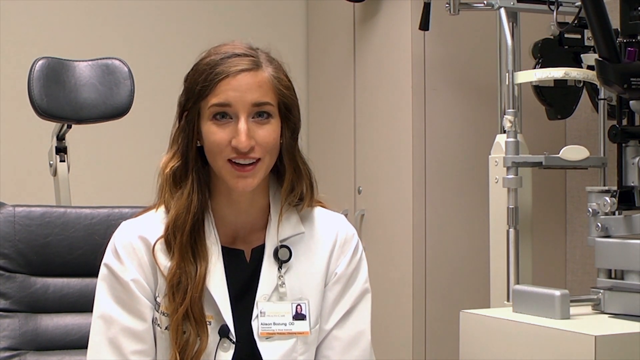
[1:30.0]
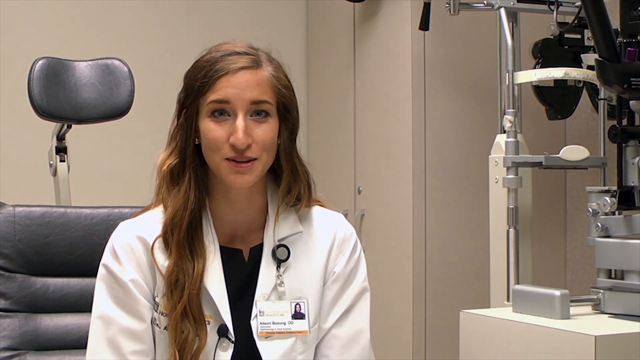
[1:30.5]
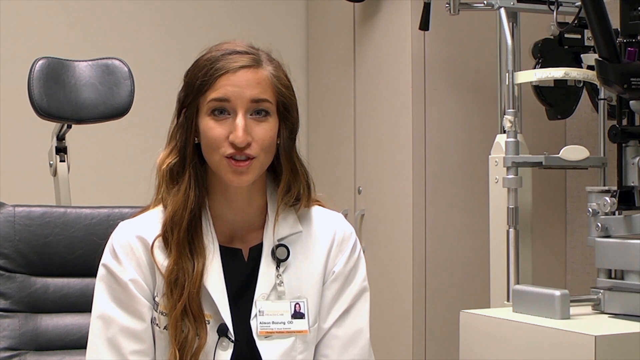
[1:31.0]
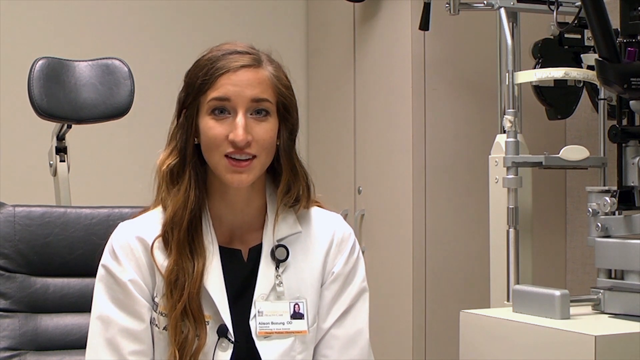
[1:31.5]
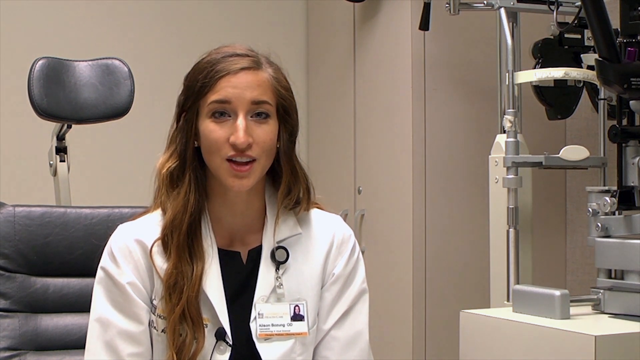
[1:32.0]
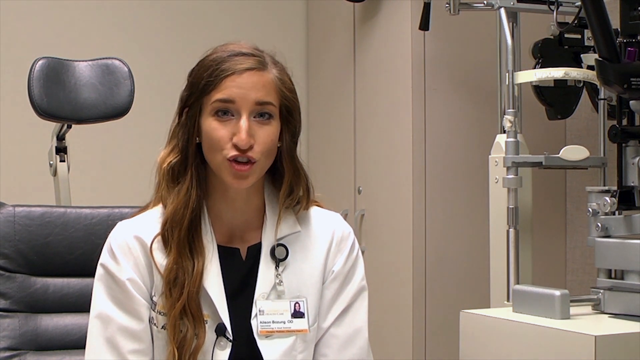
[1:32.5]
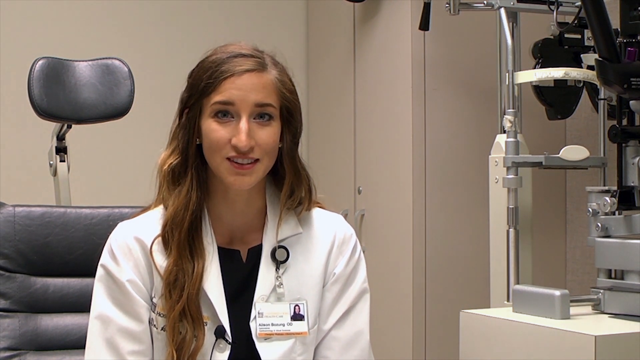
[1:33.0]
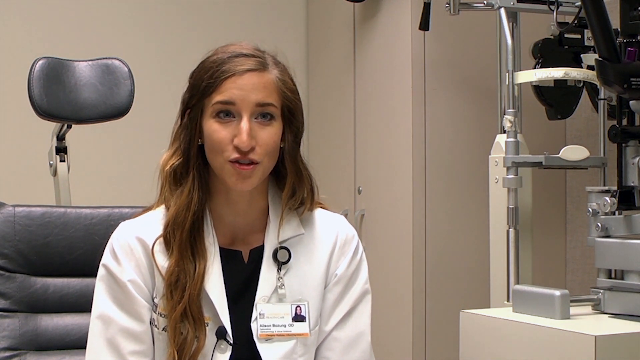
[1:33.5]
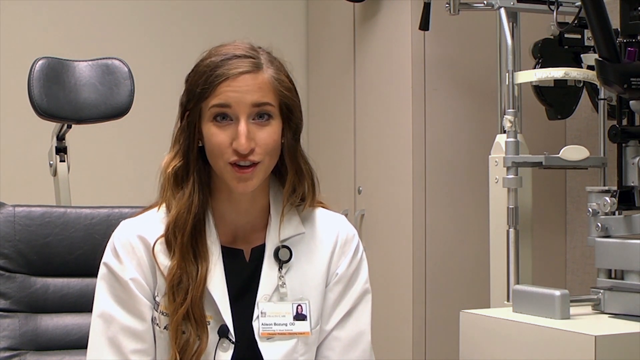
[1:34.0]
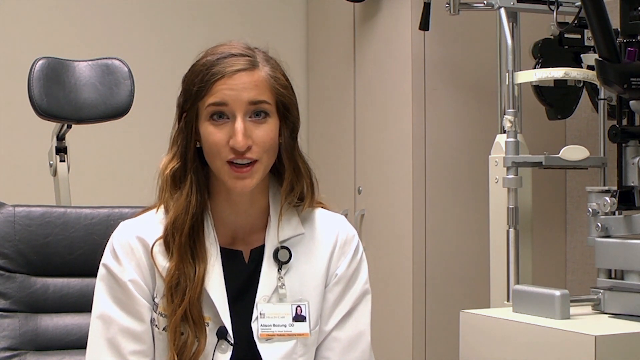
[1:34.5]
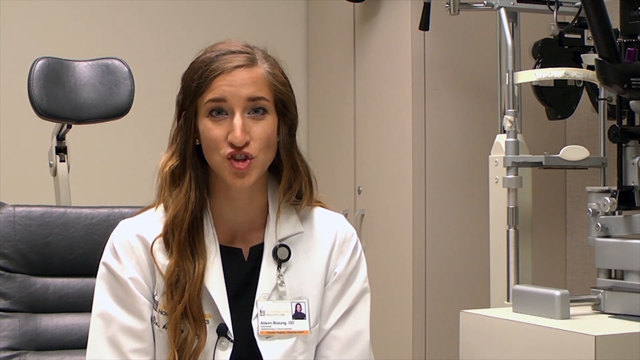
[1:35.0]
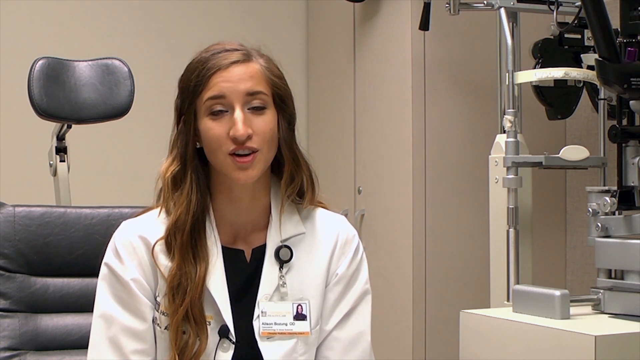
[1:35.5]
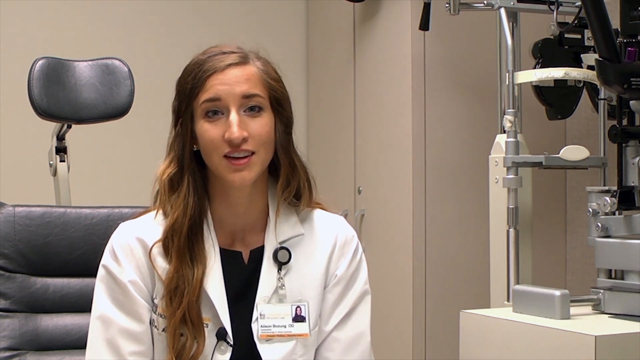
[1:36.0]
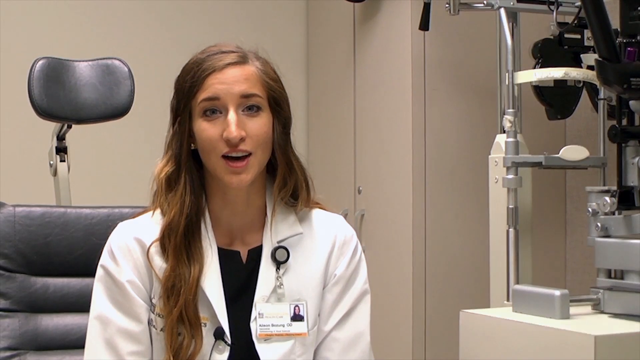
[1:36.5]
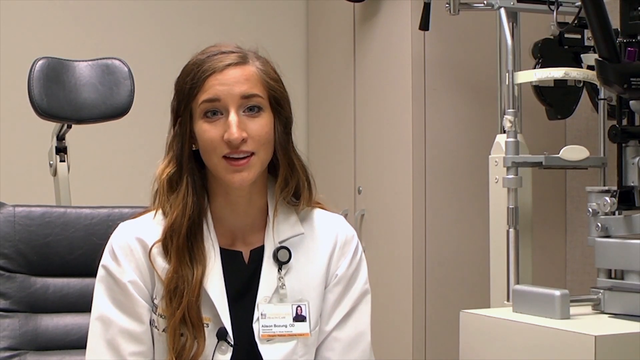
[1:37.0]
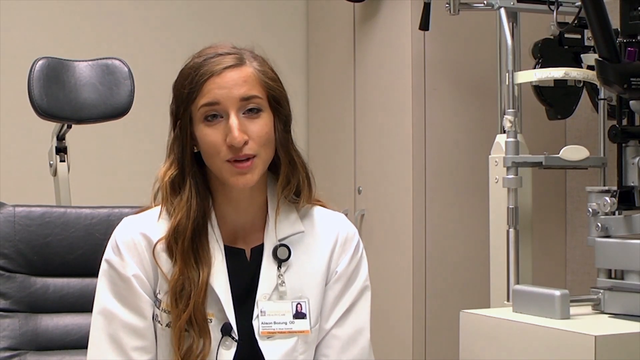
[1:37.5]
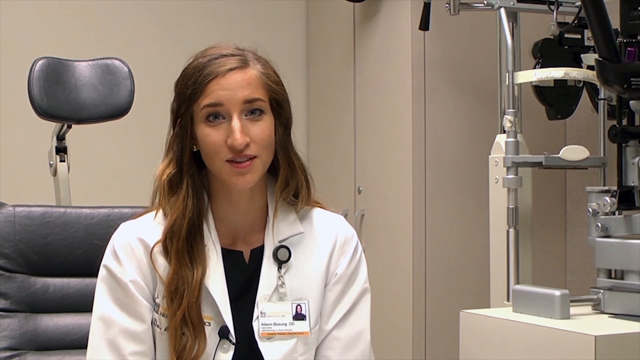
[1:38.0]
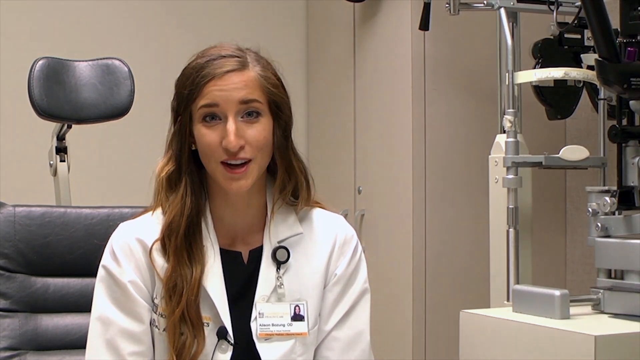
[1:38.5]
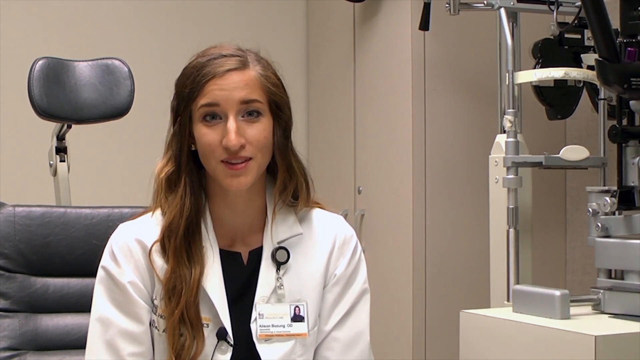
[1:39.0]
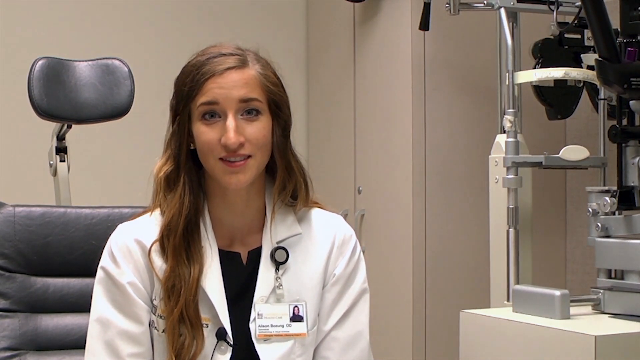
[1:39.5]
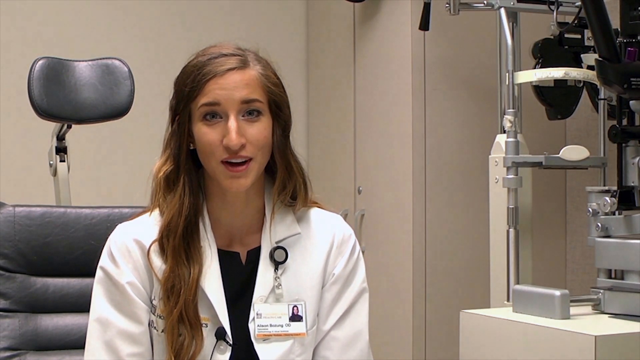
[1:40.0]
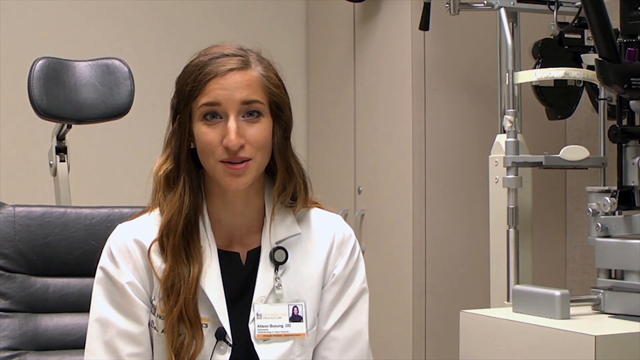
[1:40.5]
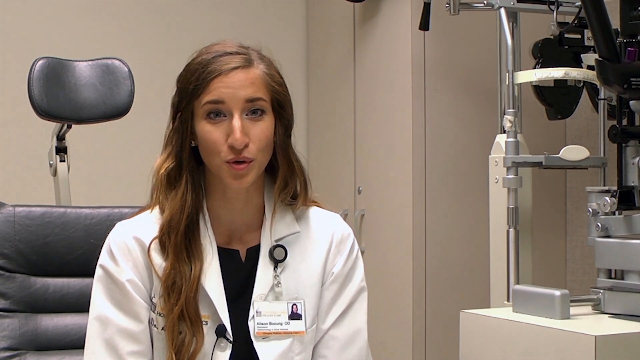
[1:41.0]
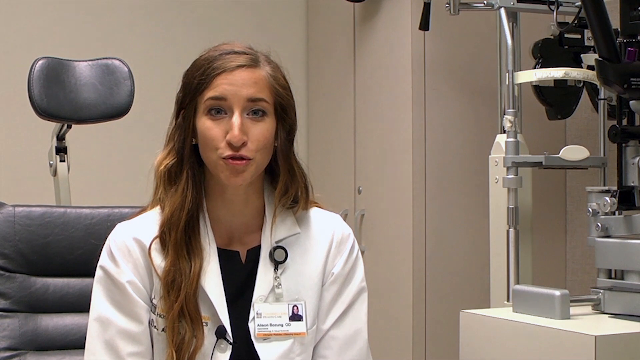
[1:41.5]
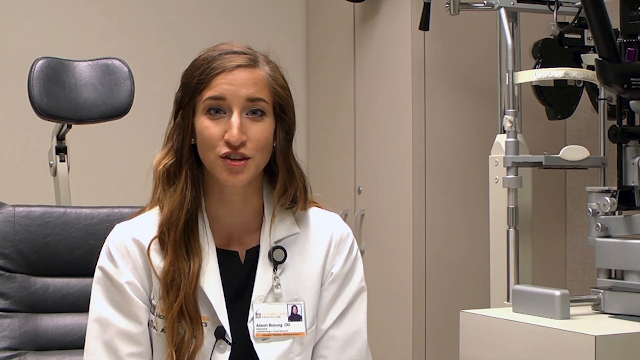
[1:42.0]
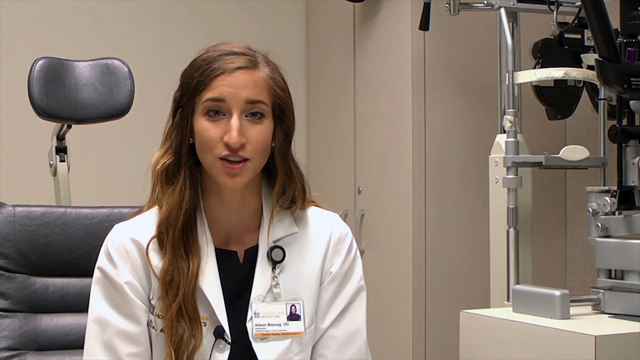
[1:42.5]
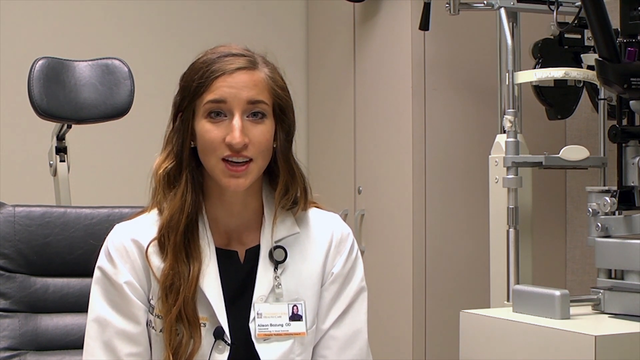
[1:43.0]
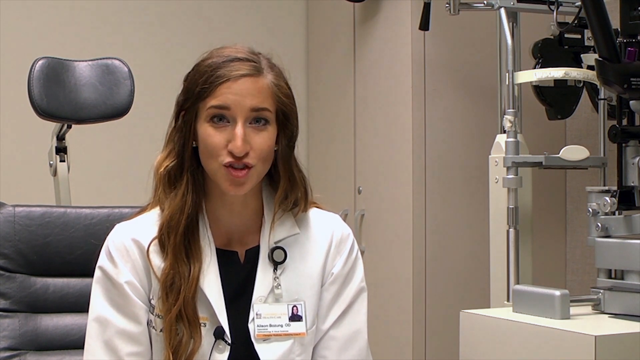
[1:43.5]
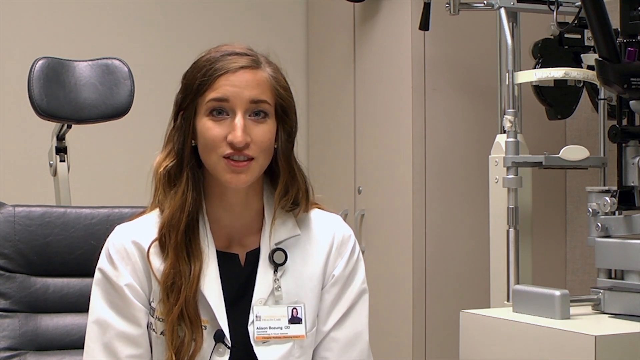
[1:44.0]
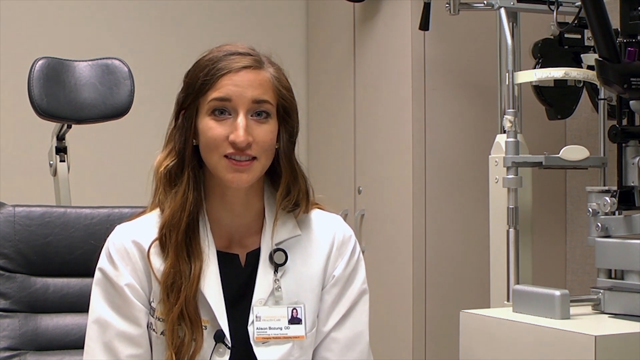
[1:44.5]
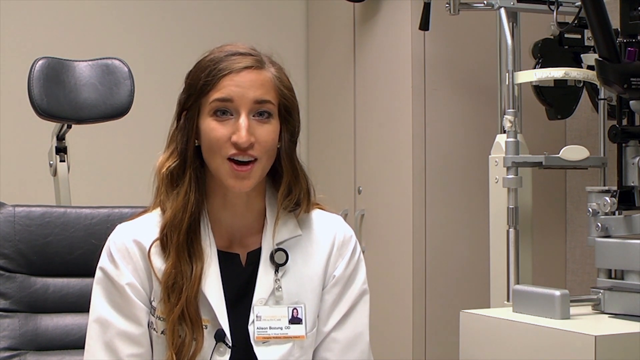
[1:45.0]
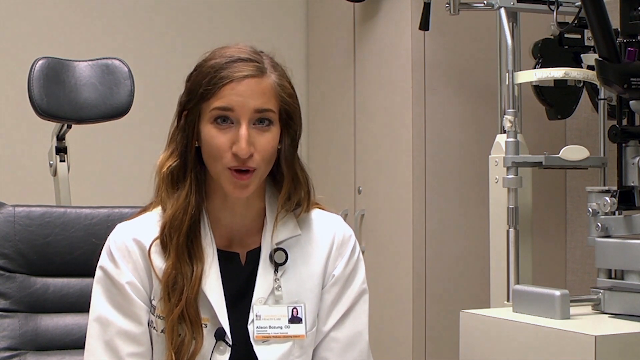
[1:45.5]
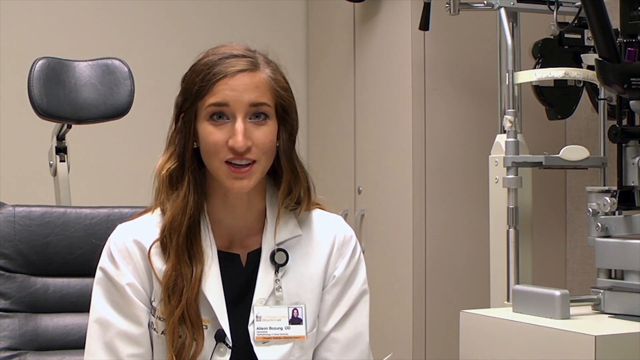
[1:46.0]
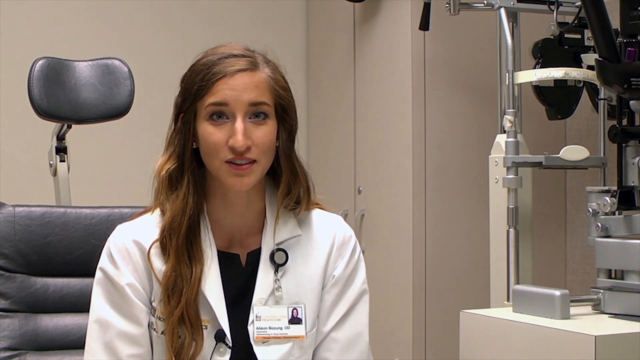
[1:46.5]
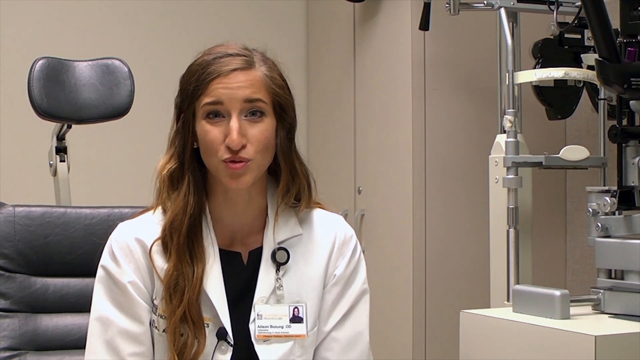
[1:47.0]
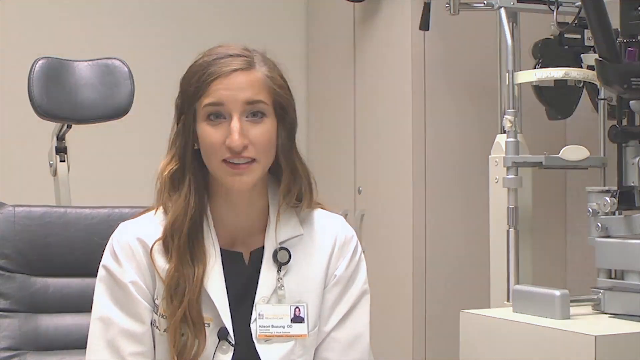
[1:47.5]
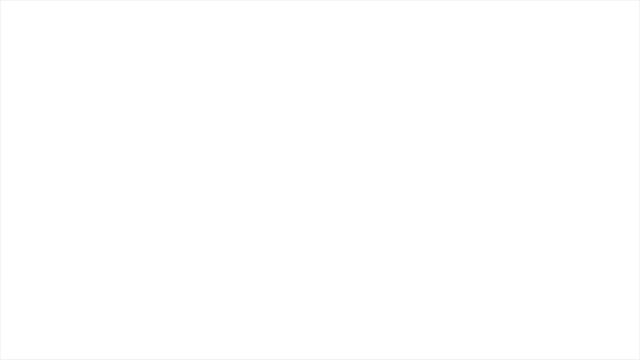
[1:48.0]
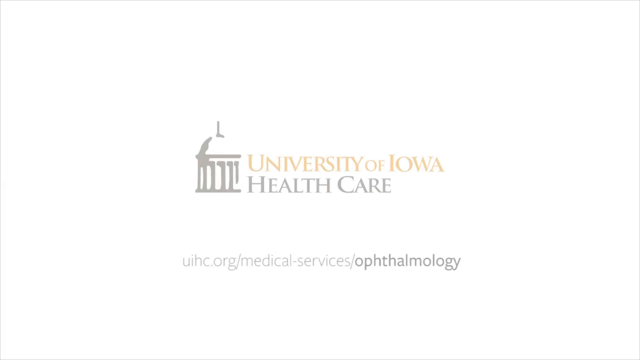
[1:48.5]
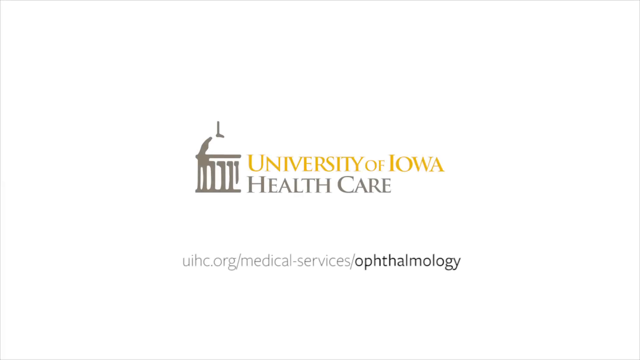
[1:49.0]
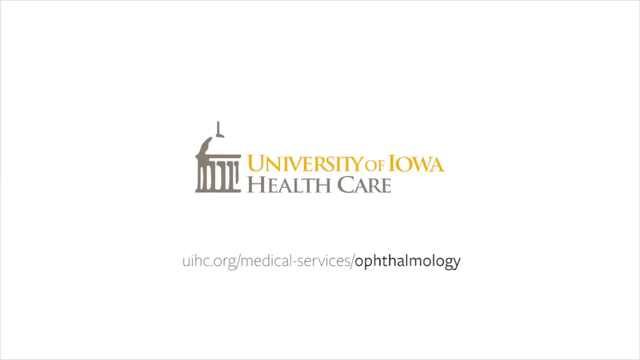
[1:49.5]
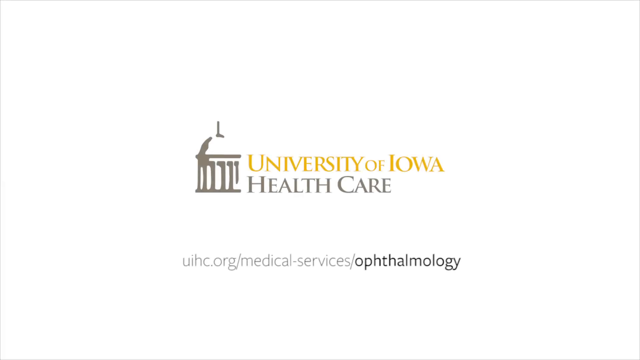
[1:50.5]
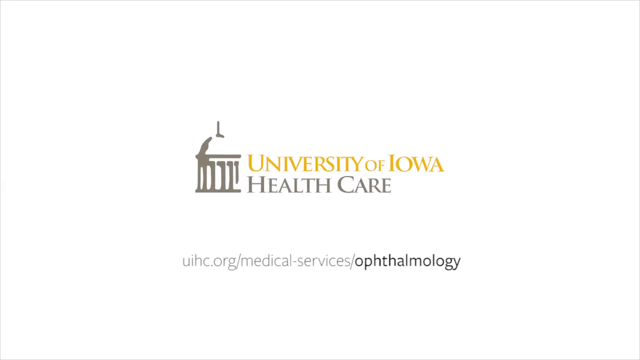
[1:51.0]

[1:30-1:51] A young Caucasian female ophthalmologist with light brown hair parted on the left side and blue eyes wears a white lab coat over a black blouse with a little V slit at the front of the neck. A microphone is clipped to her lab coat on her right side, and her lanyard with ID badge is clipped to her upper lapel on her left side. She is seated in a black and silver exam chair of leather and metal. An earring is visible in her right ear, while her left ear is mostly covered by hair. The view then changes to a white background with a small image of a dome held up by multiple columns at center left. To the right of it, yellow text says "University of Iowa," and beneath that, gray text says "health care." After a space, at the very bottom center, is "uihc.org/medical-services/ophthalmology."